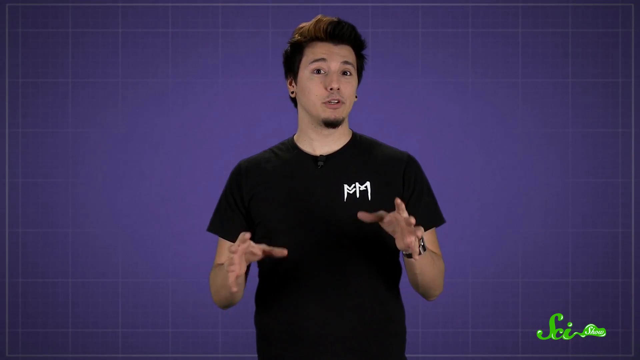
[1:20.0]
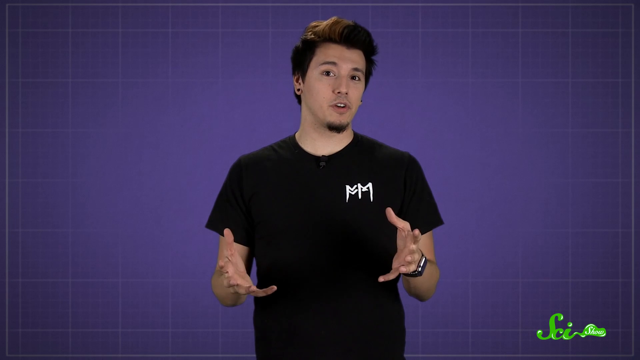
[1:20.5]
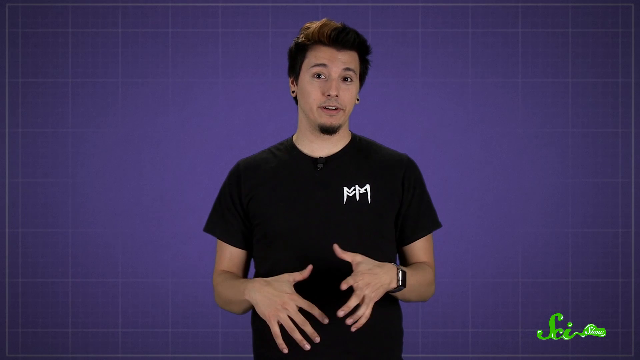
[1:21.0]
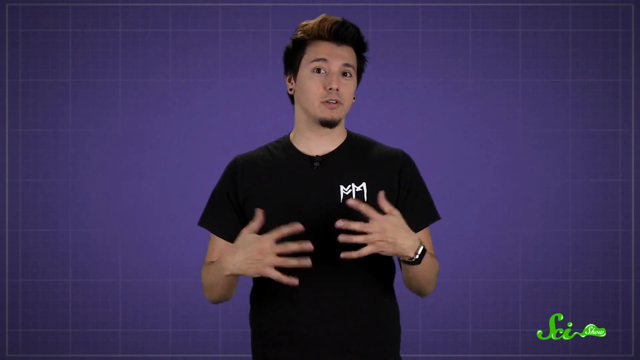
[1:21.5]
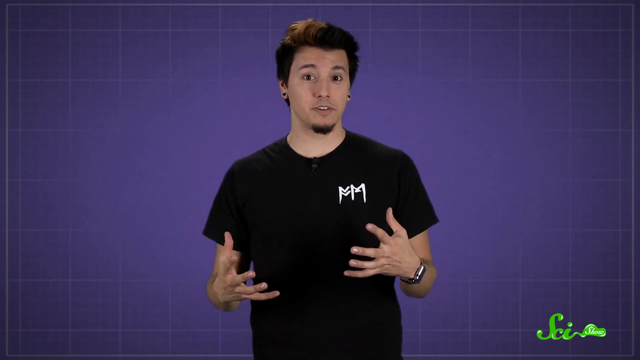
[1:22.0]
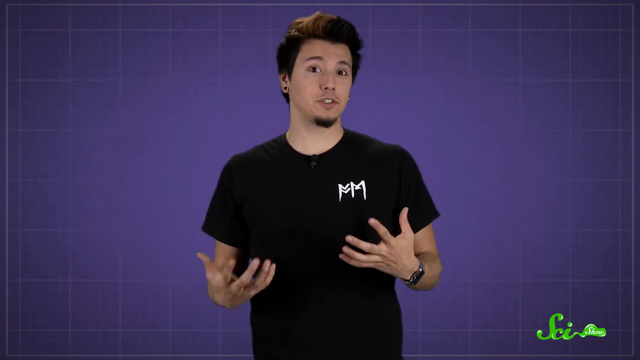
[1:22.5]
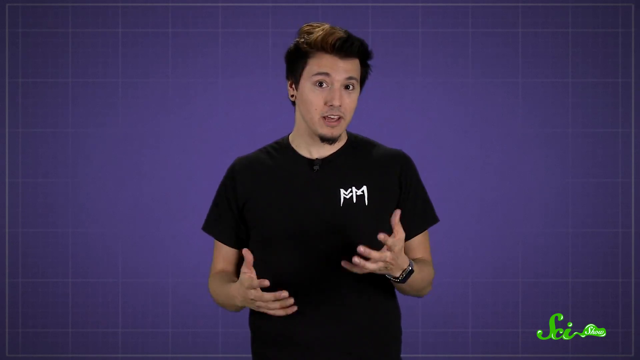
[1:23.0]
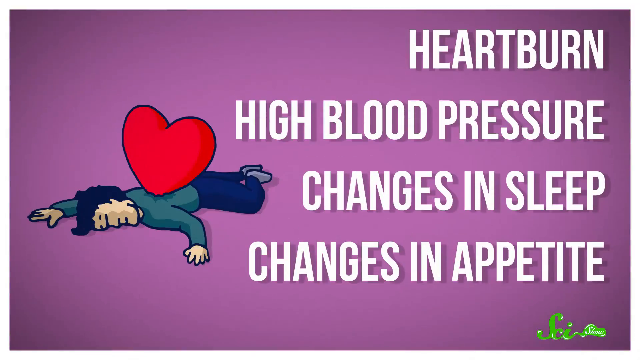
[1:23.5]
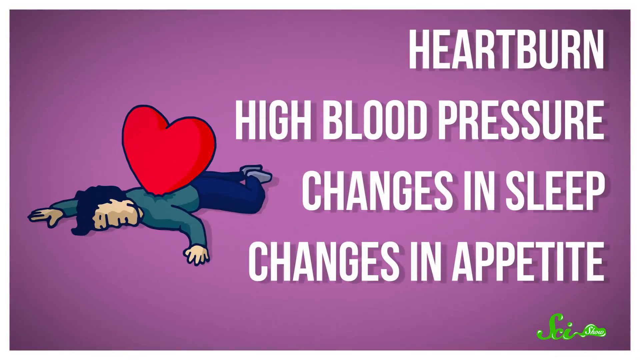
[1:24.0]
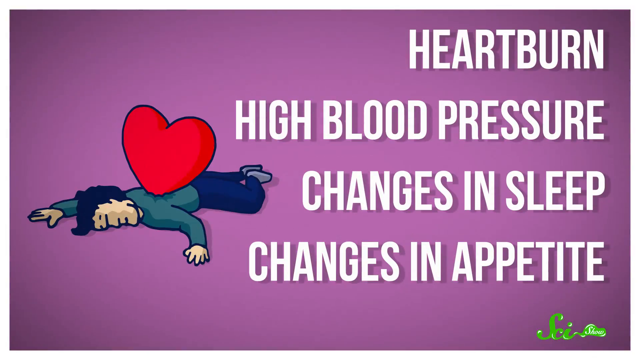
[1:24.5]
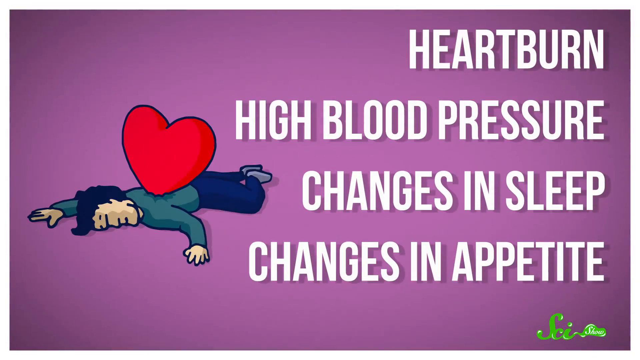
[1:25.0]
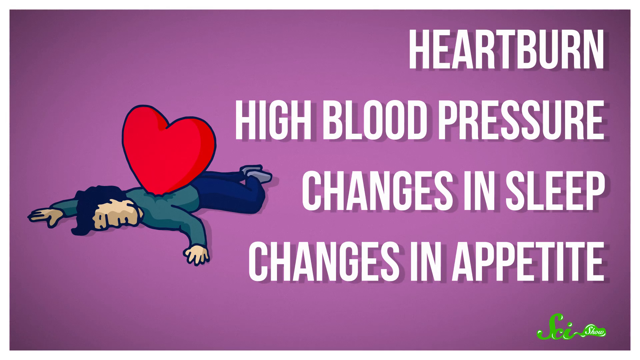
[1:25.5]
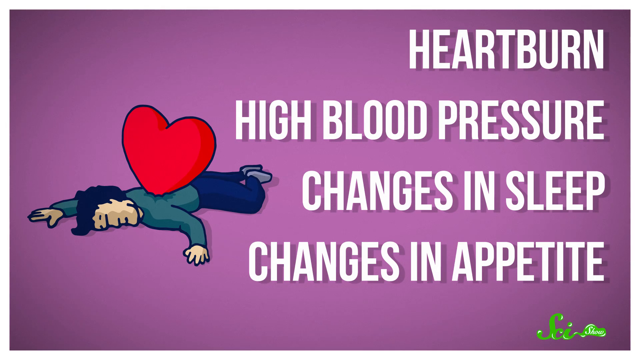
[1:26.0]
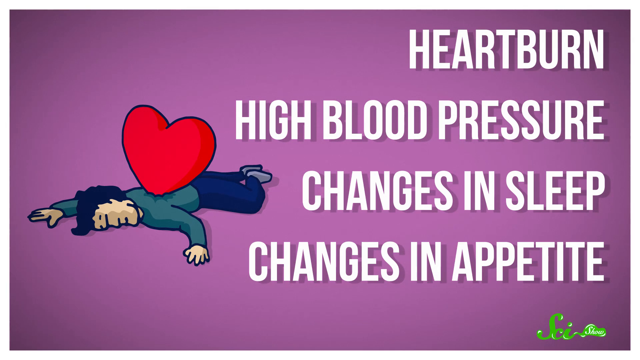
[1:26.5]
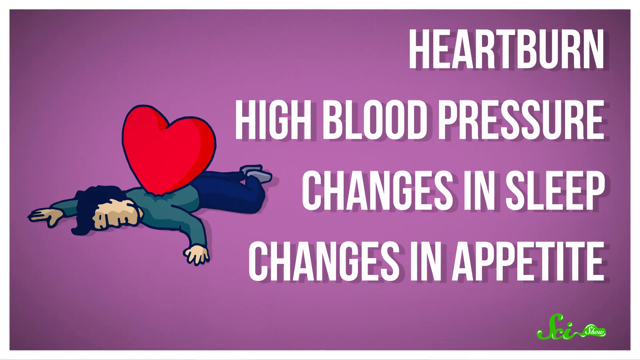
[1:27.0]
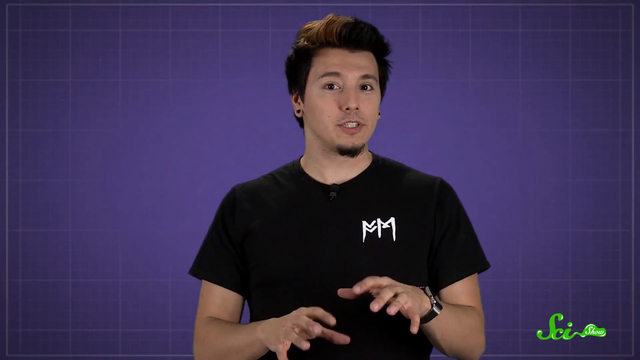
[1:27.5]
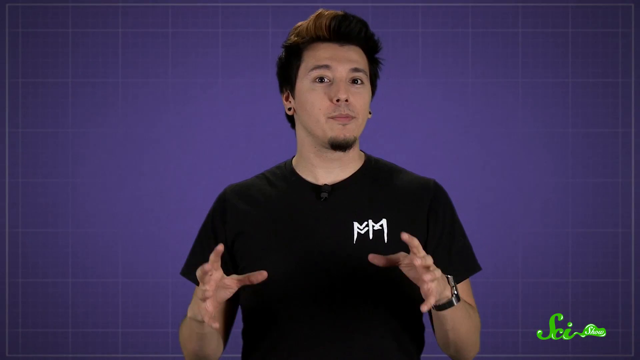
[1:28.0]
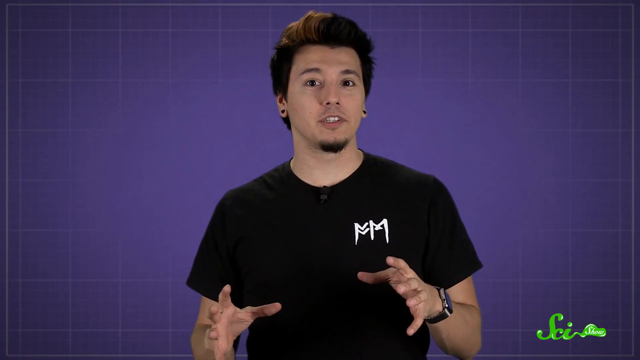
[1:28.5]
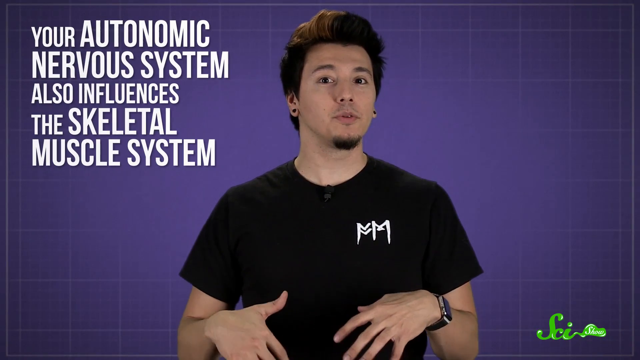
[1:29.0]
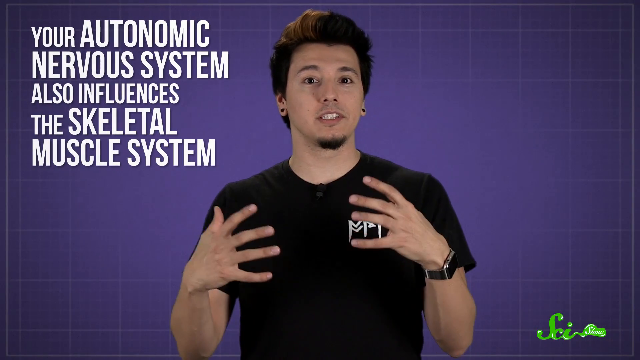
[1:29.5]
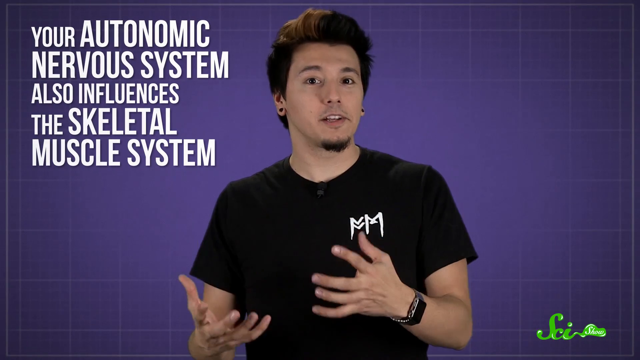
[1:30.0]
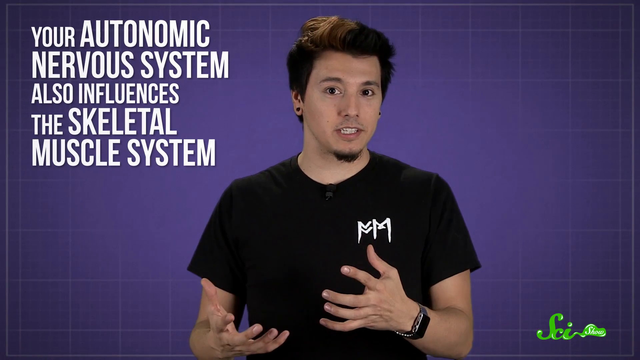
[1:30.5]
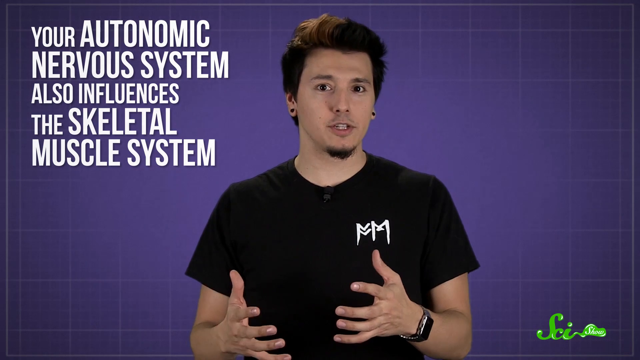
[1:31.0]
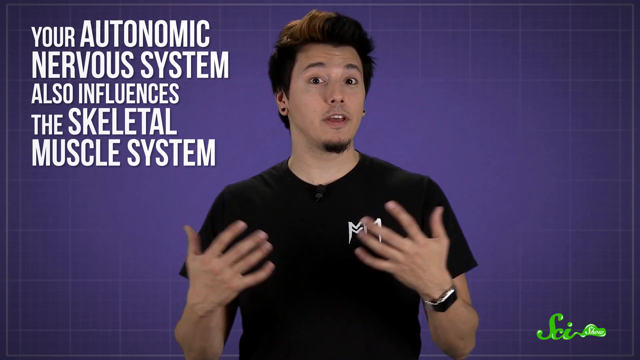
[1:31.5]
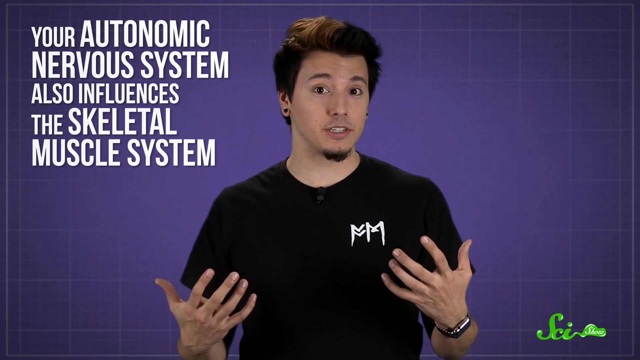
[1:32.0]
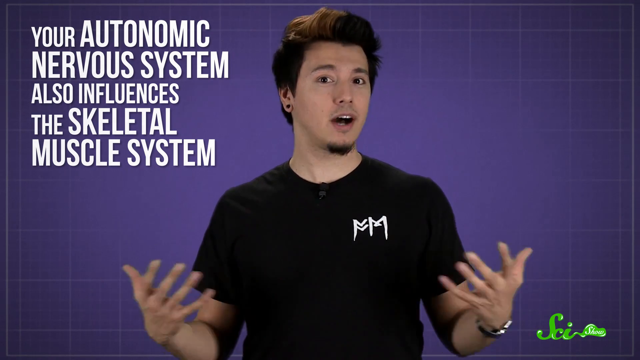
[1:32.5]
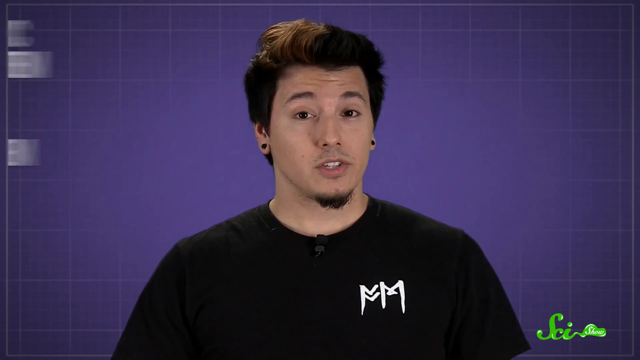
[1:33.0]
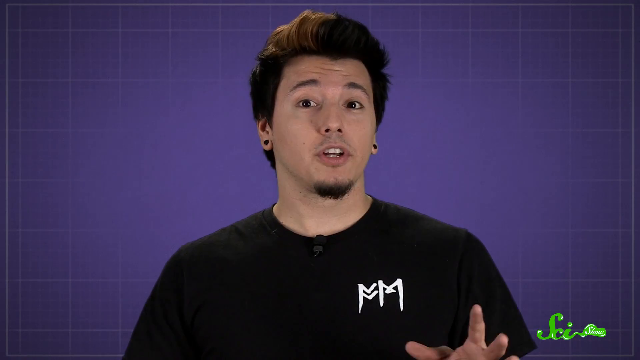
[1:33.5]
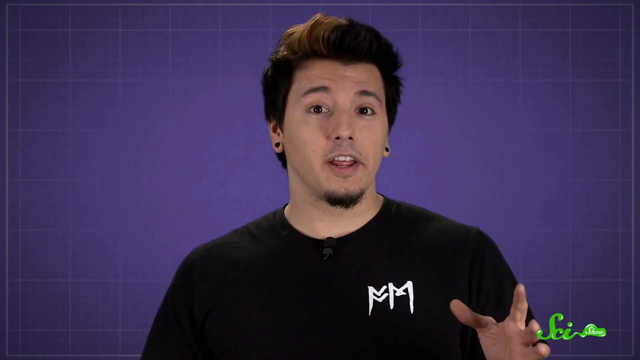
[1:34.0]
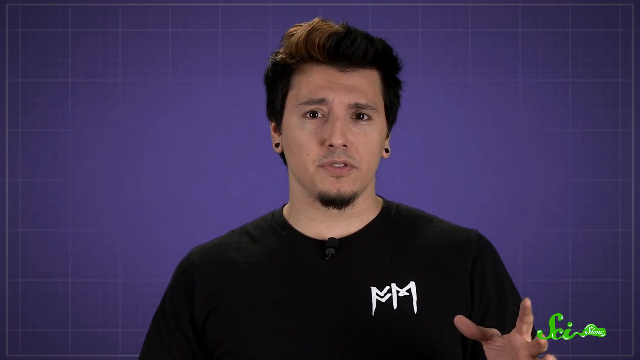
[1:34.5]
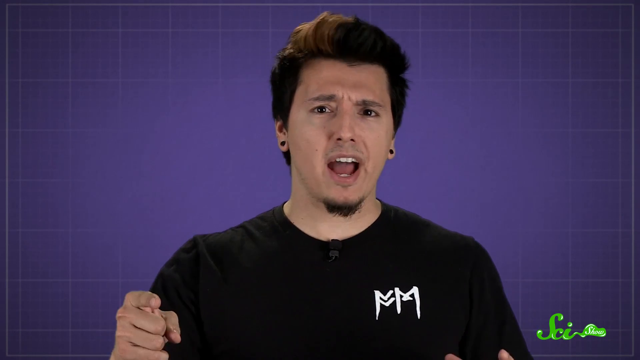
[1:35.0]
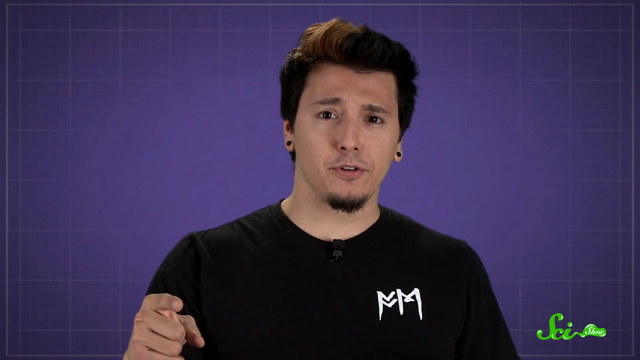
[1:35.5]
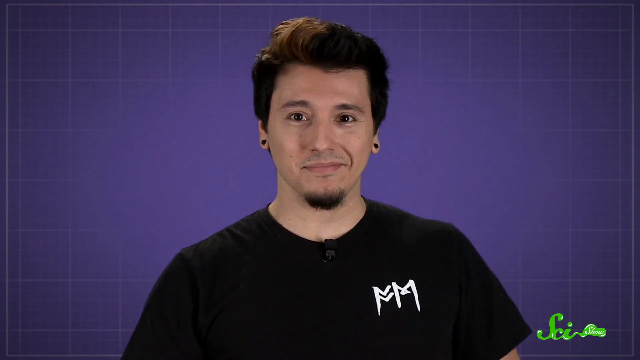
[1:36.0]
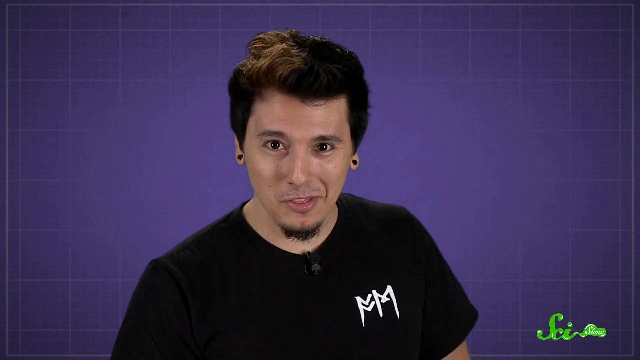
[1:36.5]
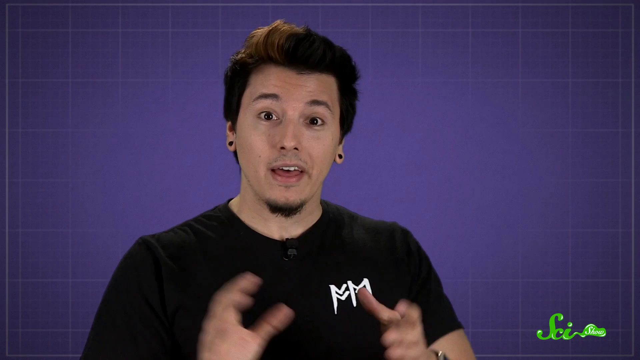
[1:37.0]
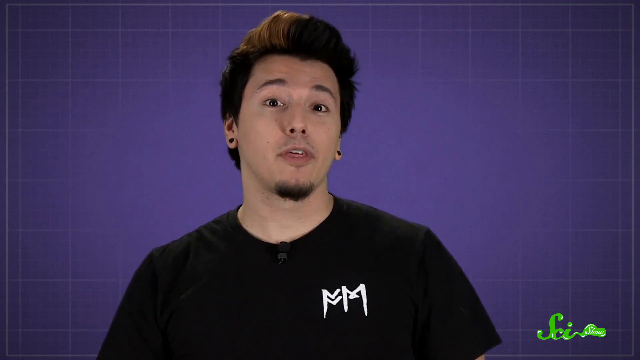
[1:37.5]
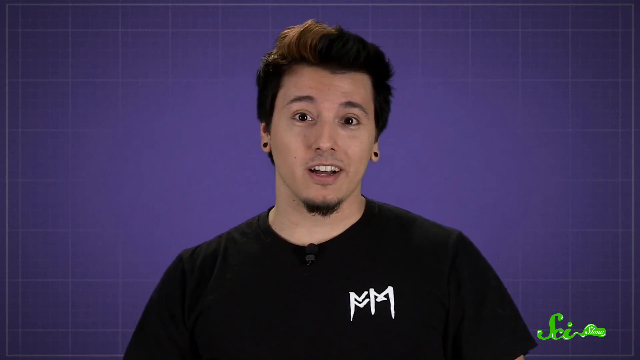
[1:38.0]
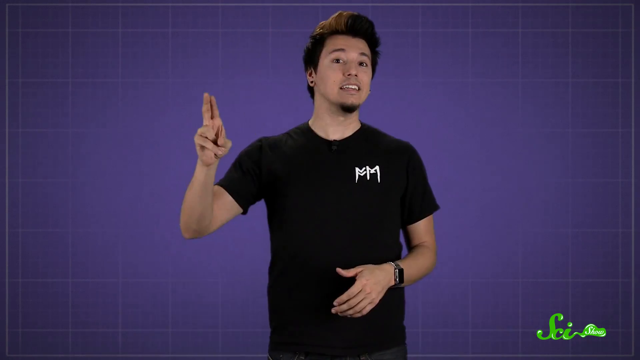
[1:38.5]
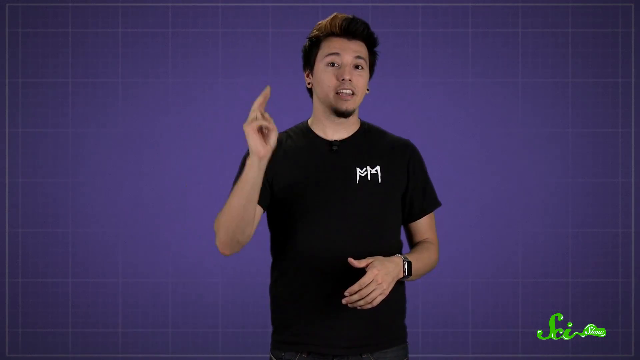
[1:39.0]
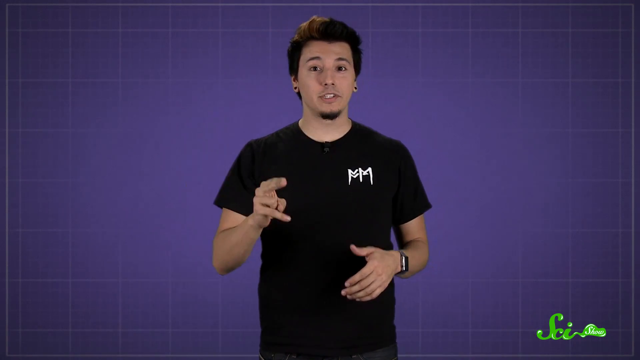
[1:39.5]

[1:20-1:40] A young man in a black T-shirt is standing against a purple background. He wears a black wristwatch and has a small black goatee and dark hair, and he speaks while gesturing with his hands. The screen then transitions to a cartoon drawing of a man laying sideways on the ground with his arms spread out. To the right of it, white text reads "heartburn, high blood pressure, changes in sleep, changes in appetite." This stays on screen for a few seconds, then the drawing moves upward off the screen in an animation, revealing the purple background and the young man in a black T-shirt speaking. Text slides onto the screen from the upper left corner, written in white: "your autonomic nervous system also influences the skeletal muscle system." As he speaks, the young man gestures with his hands as if speaking passionately, with a slight smile on his face, almost looking amused.